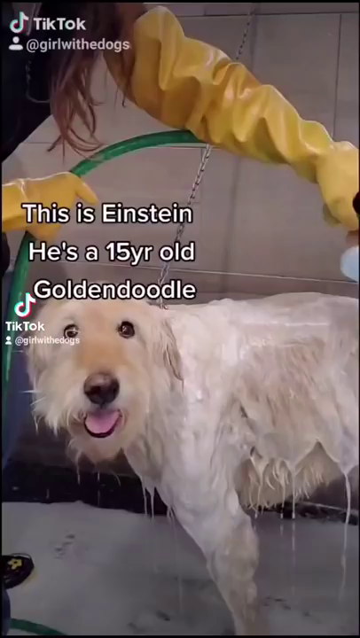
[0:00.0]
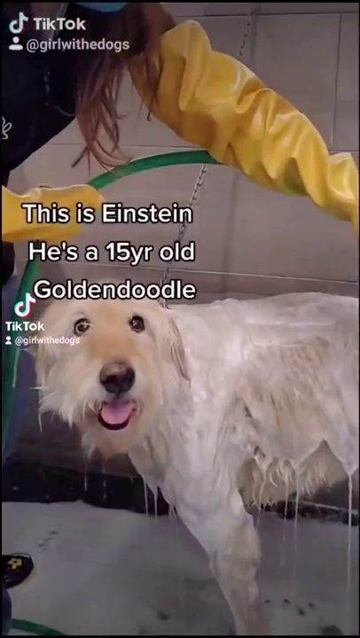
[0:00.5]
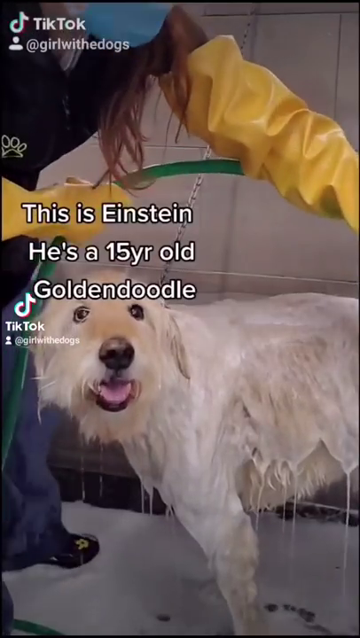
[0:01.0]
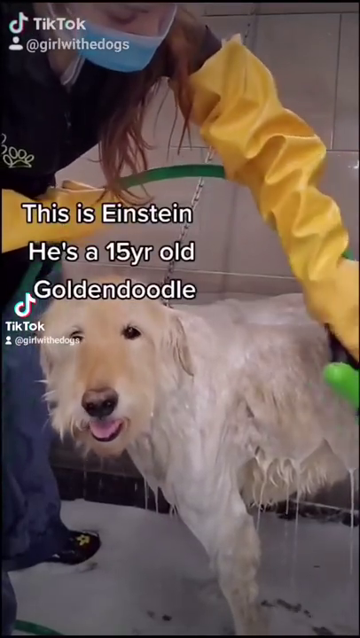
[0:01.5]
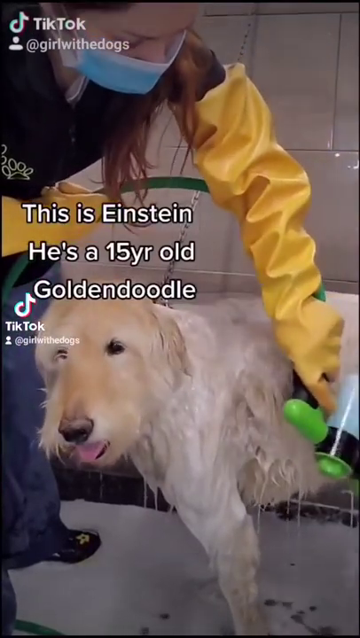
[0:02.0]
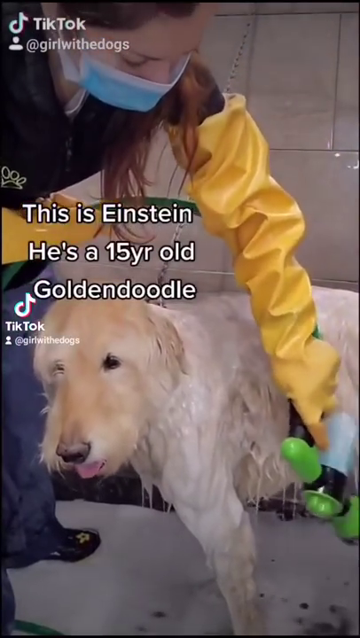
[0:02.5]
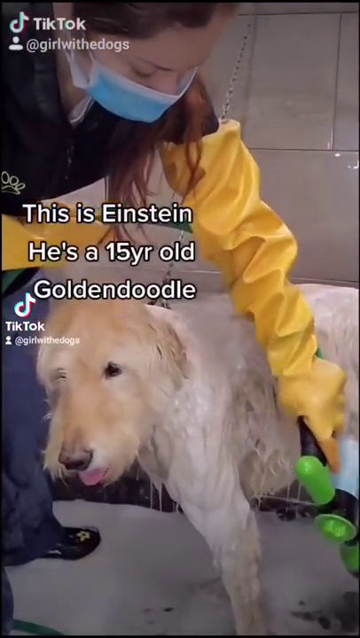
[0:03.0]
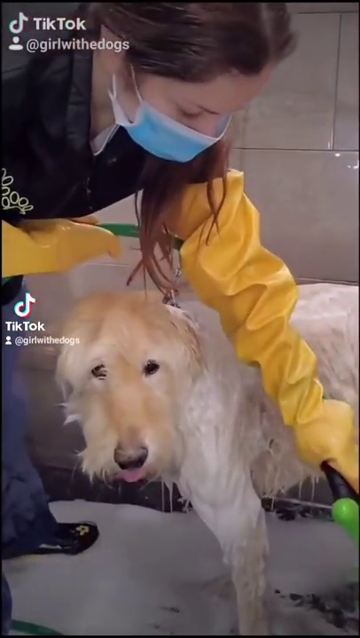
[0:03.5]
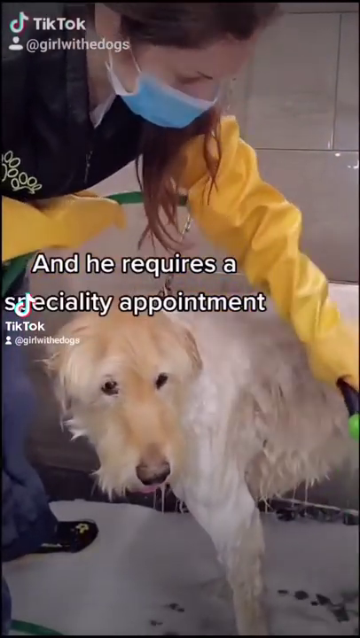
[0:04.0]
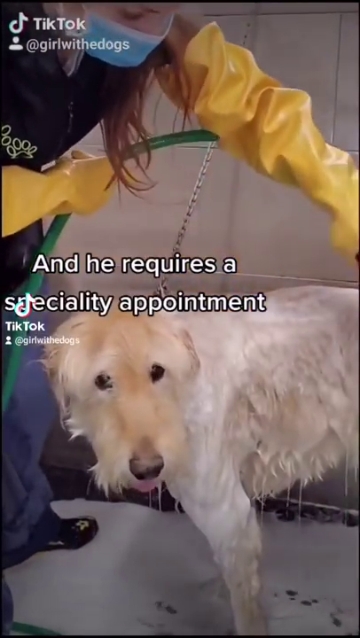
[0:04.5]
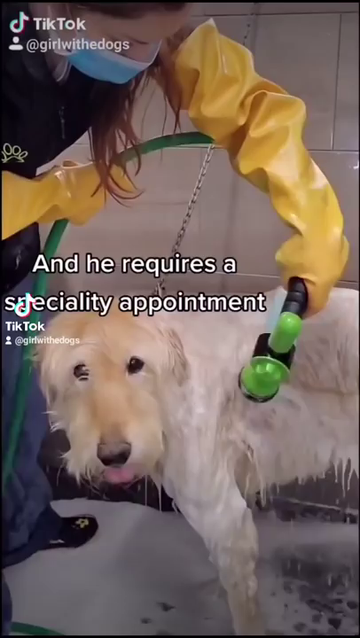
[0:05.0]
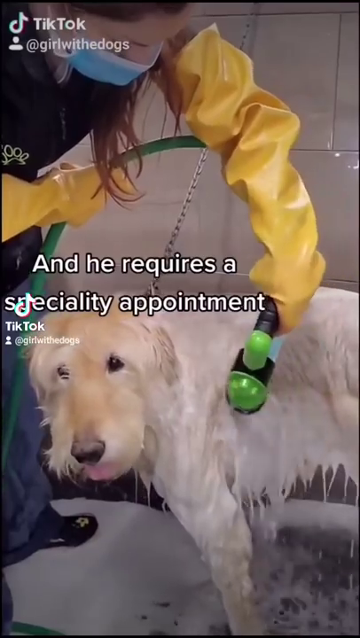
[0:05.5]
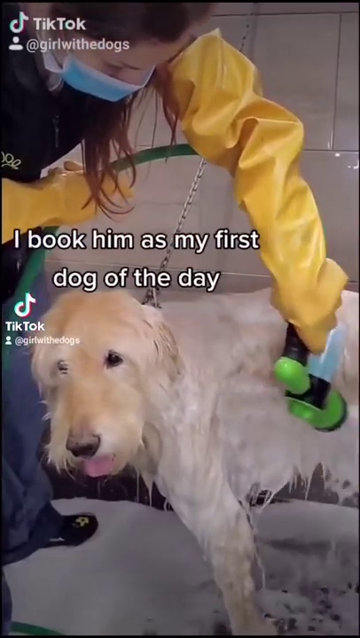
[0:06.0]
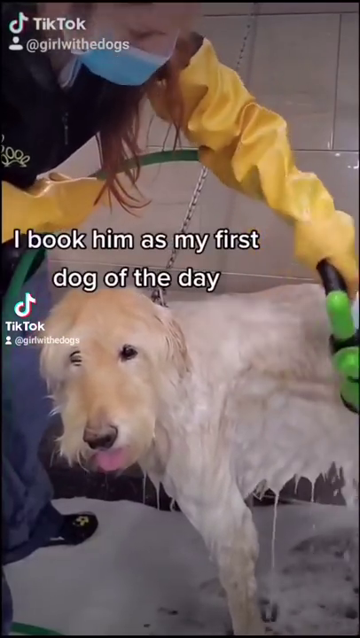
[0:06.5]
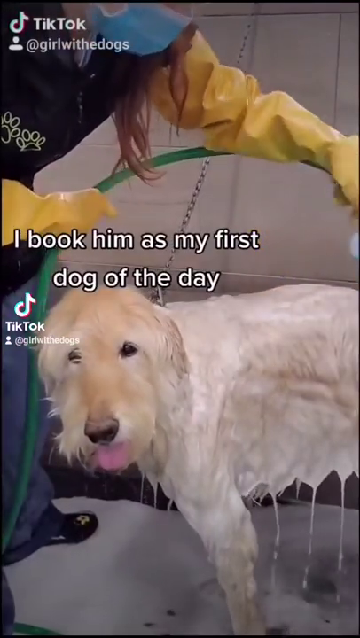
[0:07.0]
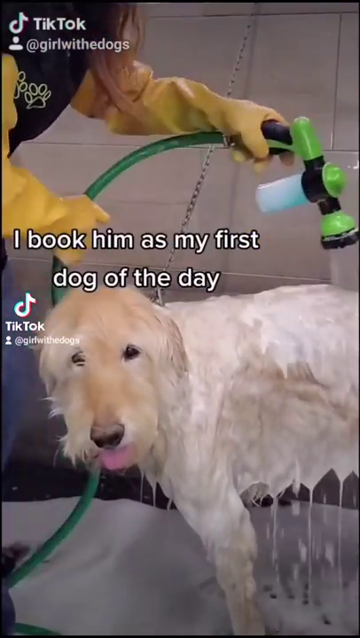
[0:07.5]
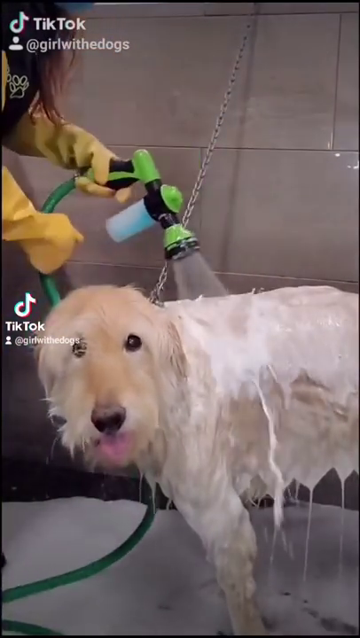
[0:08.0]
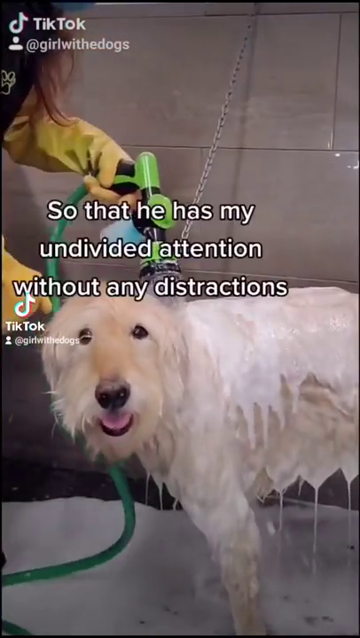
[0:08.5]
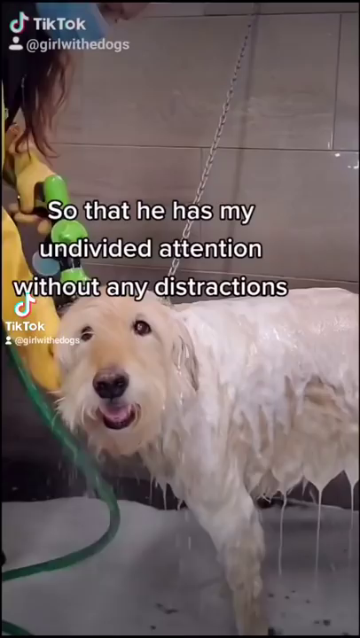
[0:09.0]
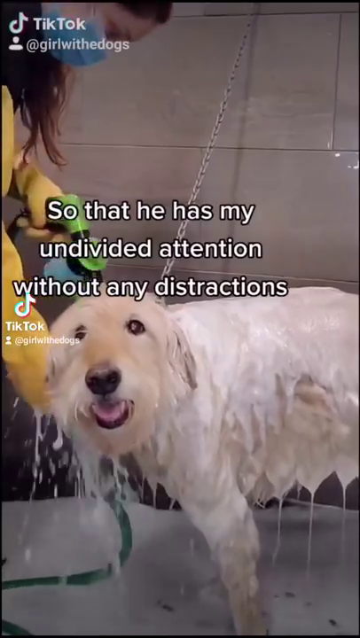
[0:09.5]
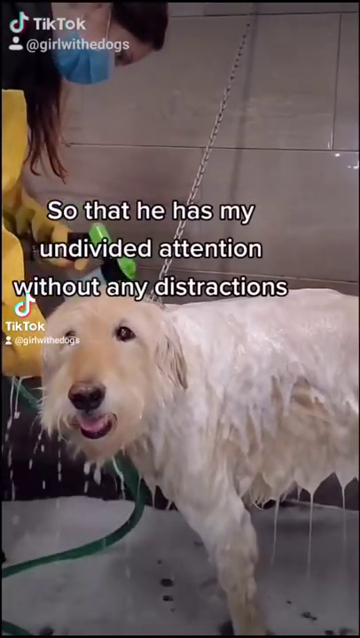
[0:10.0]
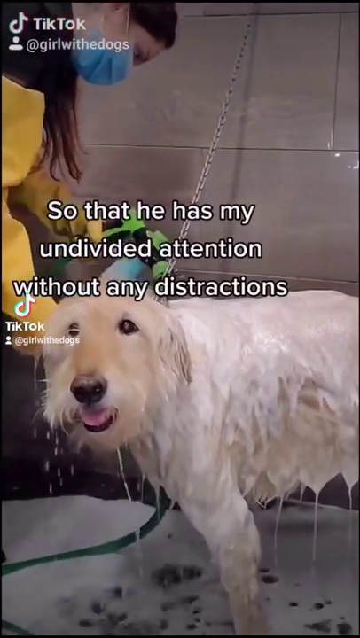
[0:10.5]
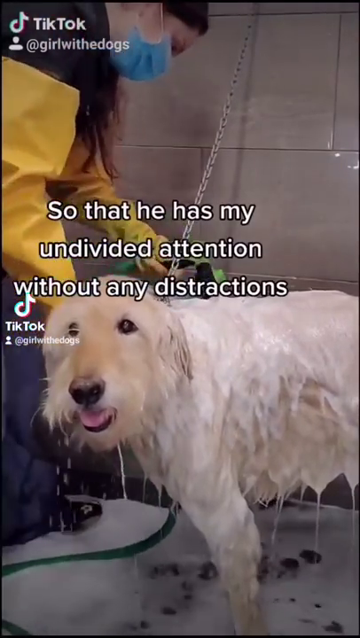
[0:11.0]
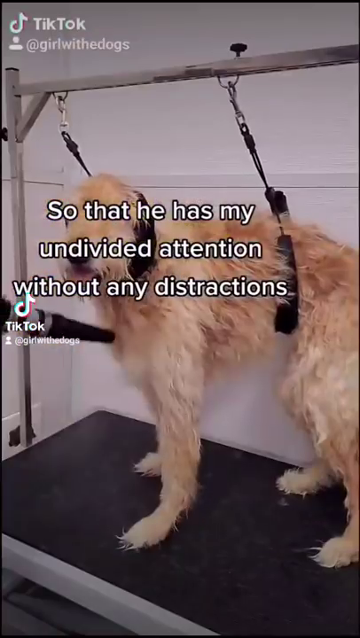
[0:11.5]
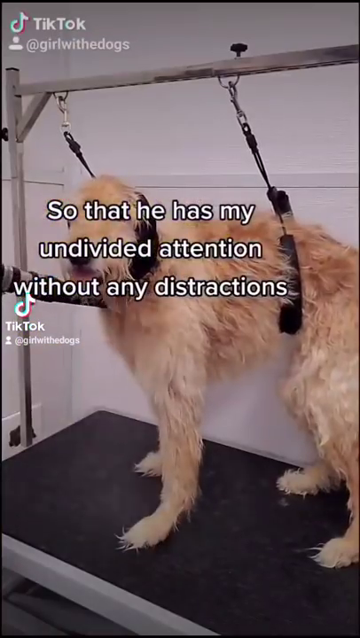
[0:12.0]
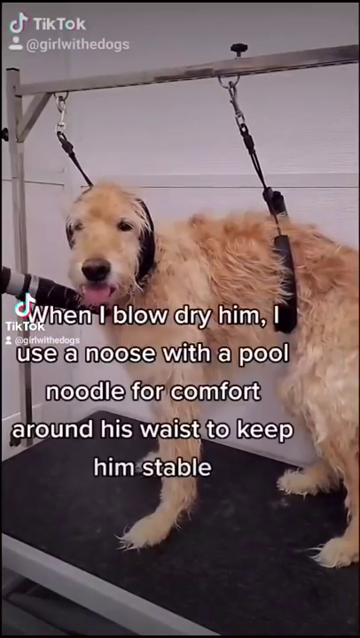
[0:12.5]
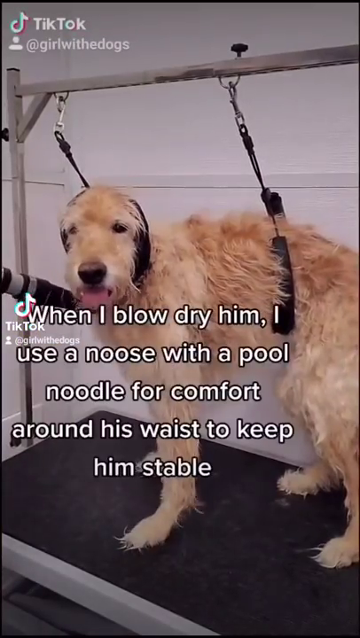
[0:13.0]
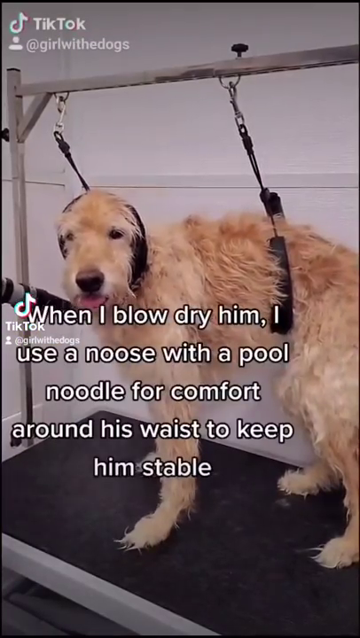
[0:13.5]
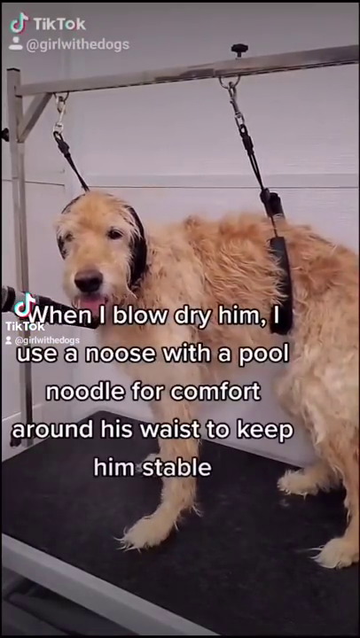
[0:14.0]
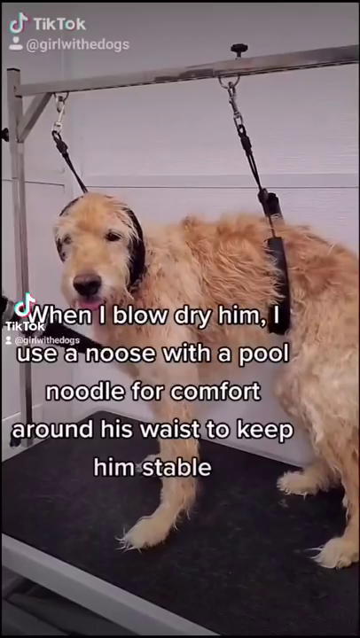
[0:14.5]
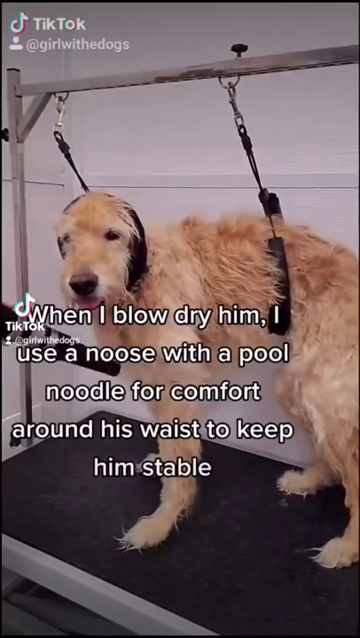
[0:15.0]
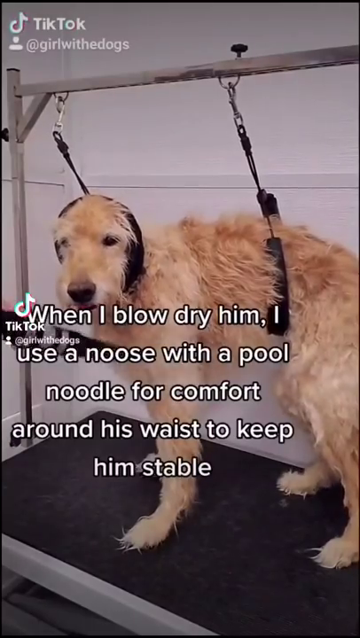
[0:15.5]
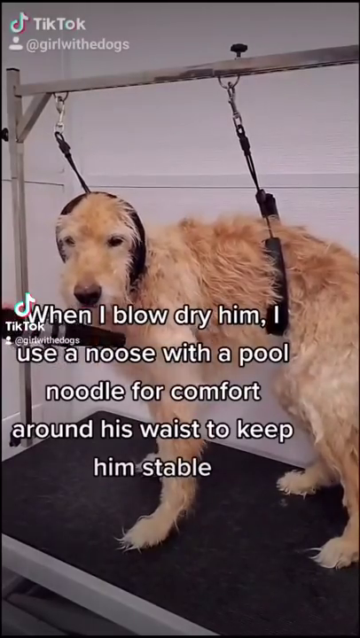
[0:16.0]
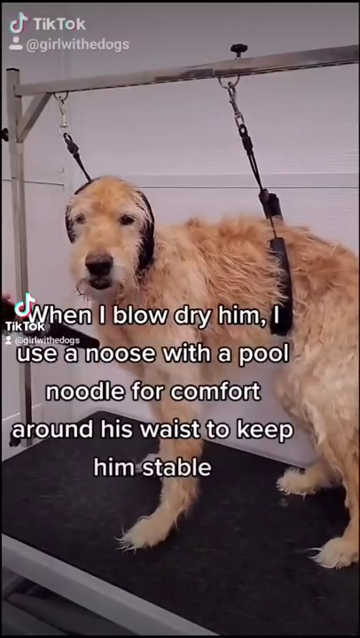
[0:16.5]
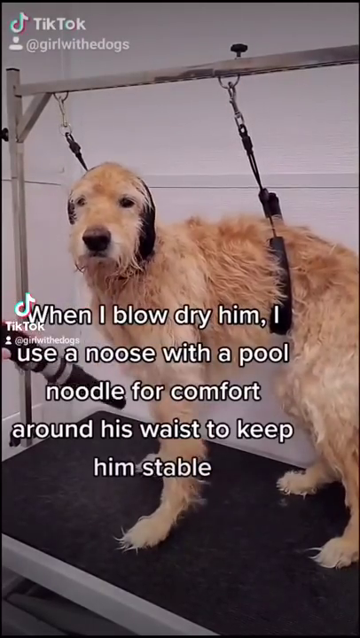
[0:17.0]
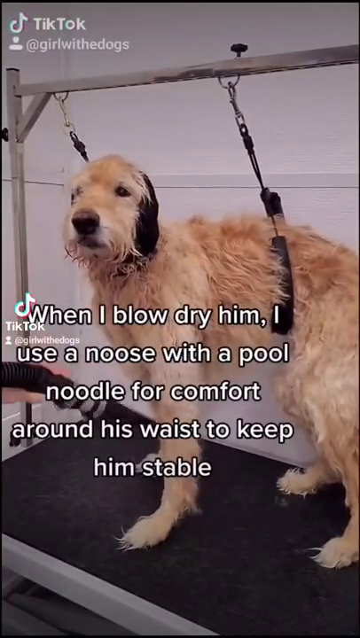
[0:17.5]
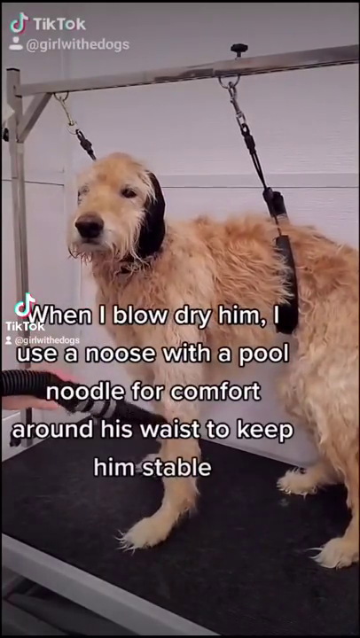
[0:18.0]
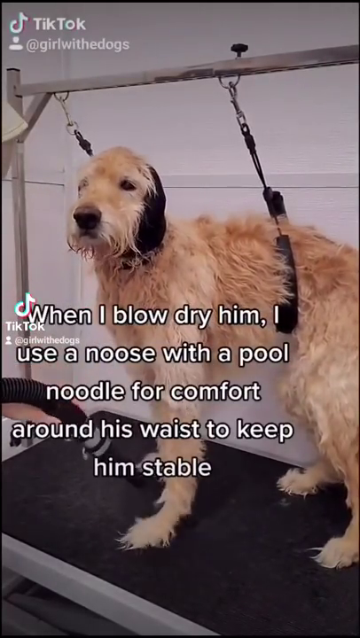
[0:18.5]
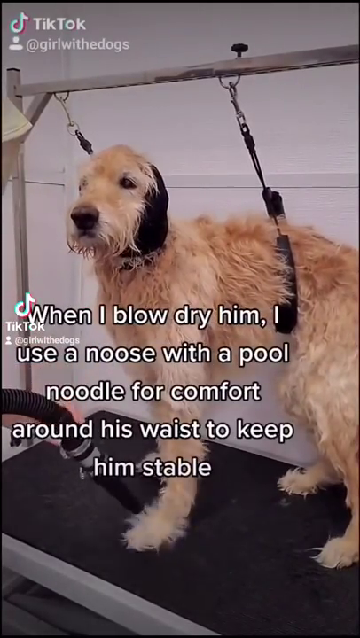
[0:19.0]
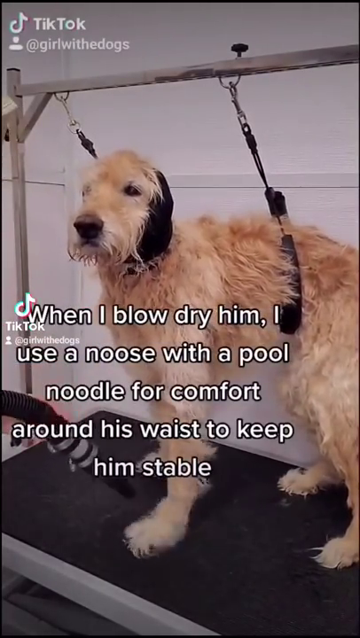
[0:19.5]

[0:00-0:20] The video is a TikTok clip, with the TikTok symbol in white and the text "TikTok" in the top left. Underneath is a user profile icon, and next to it is the handle "@girlwiththedogs". A woman wearing a blue face mask and long yellow rubber gloves is washing a dog, giving it a bath with a hose and some sort of soap mixture. Toward the middle of the screen, white text with a black outline reads "I book him as my first dog of the day", and white text with a black outline also reads "this is Einstein, he's a 15 year old golden doodle". The text changes throughout the scene.